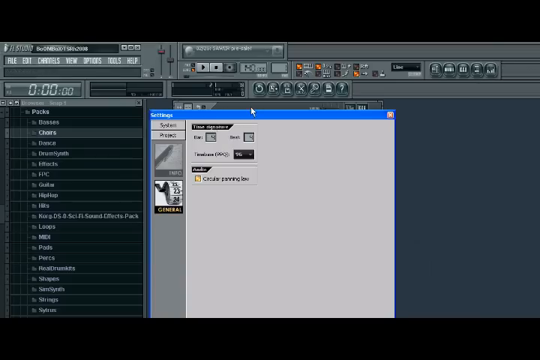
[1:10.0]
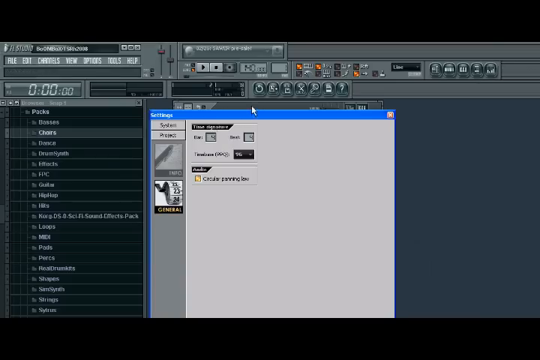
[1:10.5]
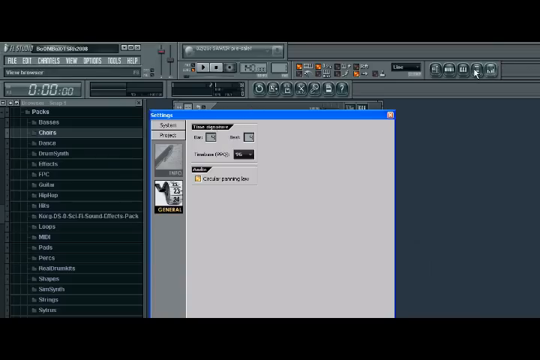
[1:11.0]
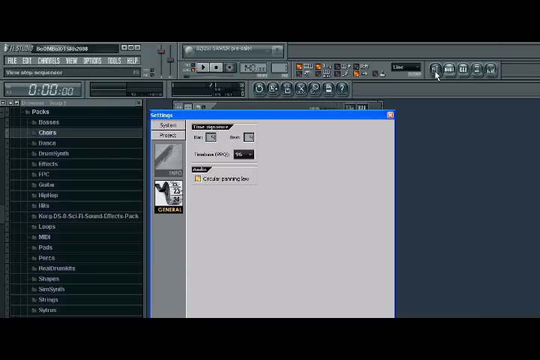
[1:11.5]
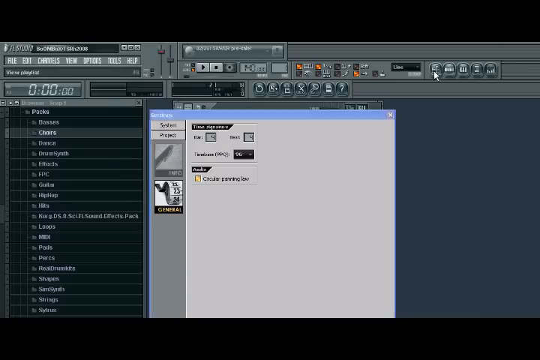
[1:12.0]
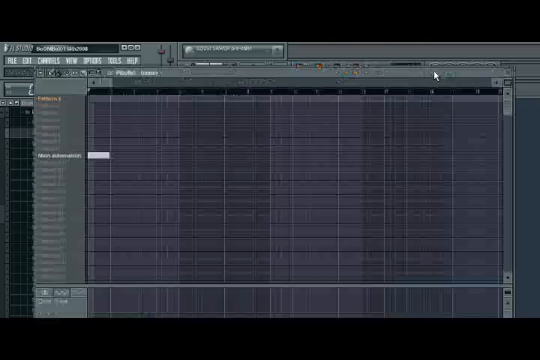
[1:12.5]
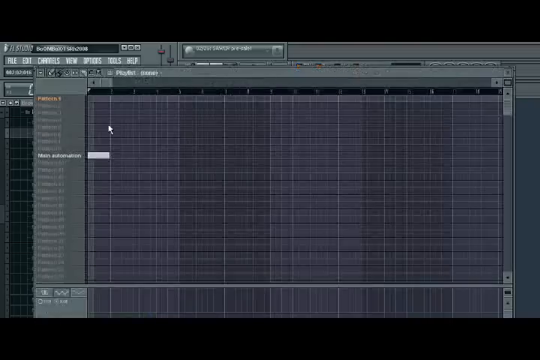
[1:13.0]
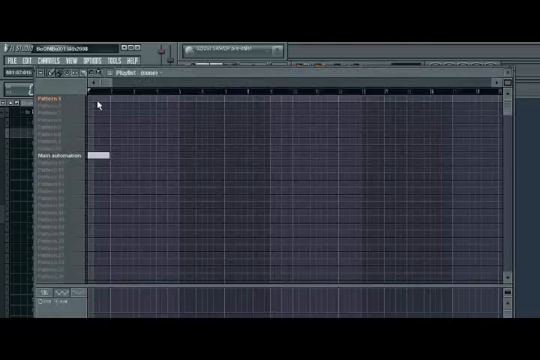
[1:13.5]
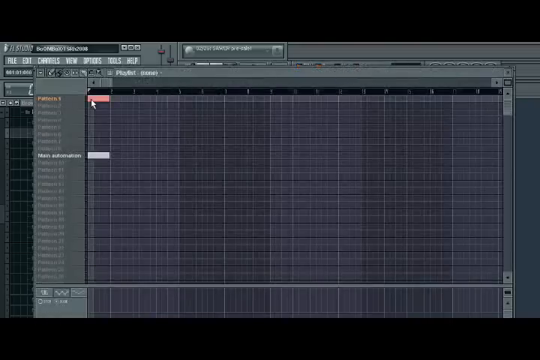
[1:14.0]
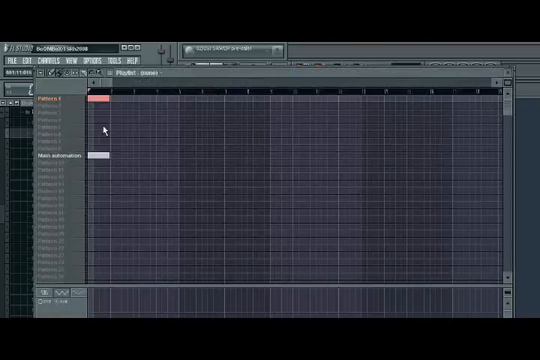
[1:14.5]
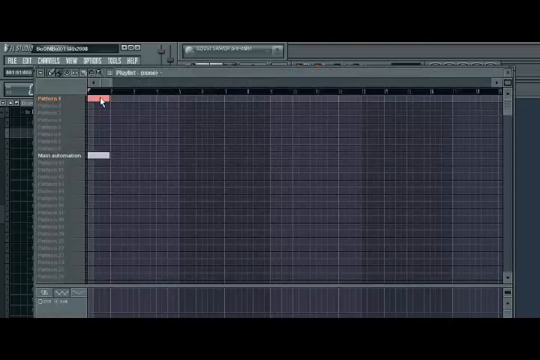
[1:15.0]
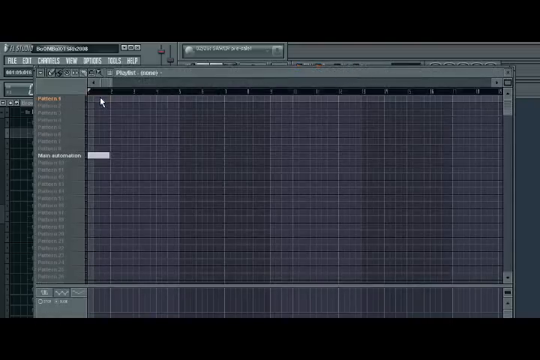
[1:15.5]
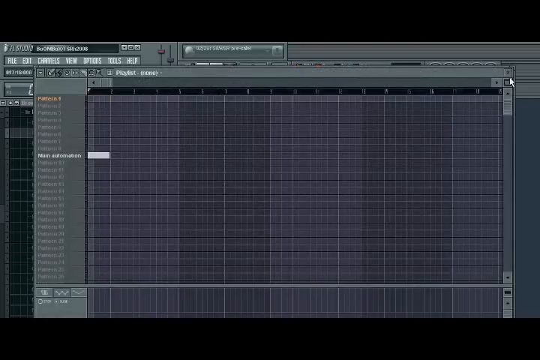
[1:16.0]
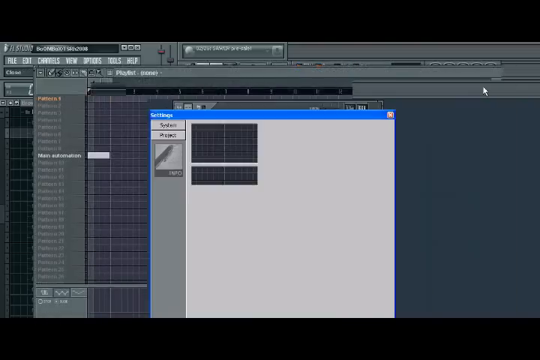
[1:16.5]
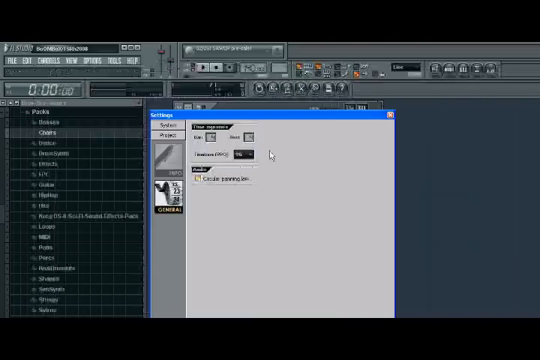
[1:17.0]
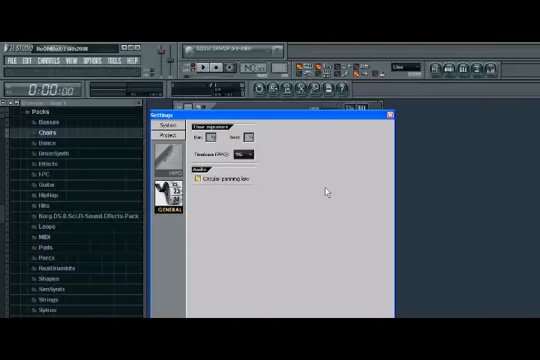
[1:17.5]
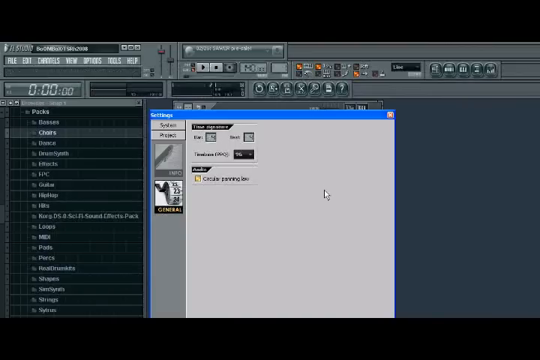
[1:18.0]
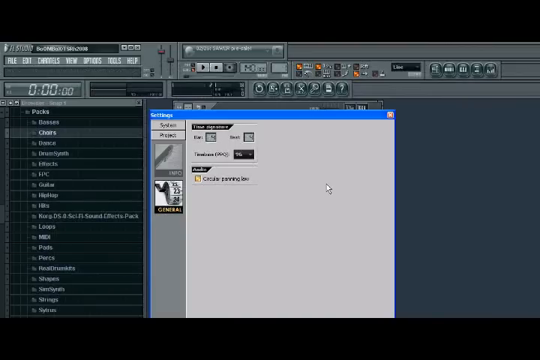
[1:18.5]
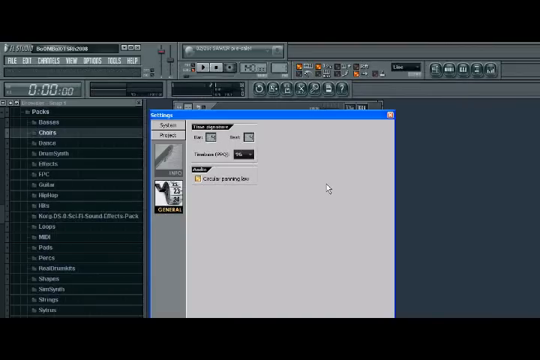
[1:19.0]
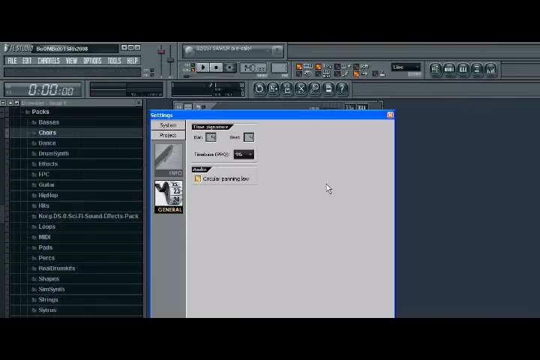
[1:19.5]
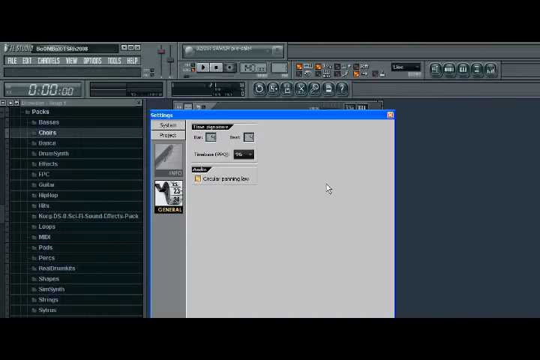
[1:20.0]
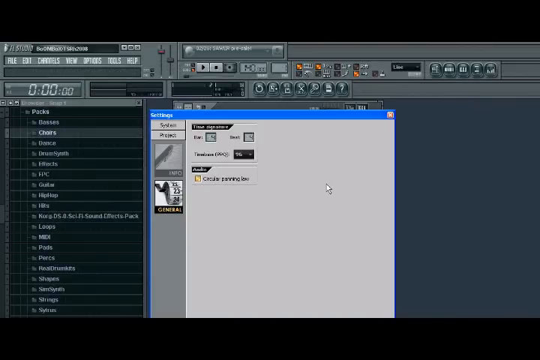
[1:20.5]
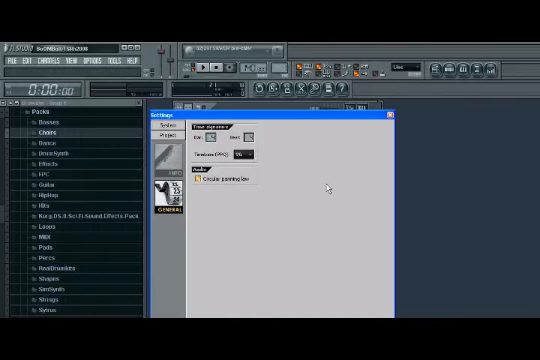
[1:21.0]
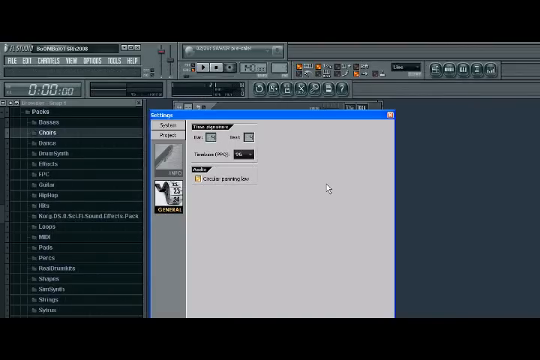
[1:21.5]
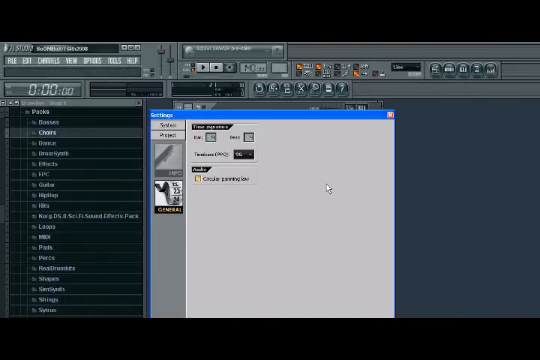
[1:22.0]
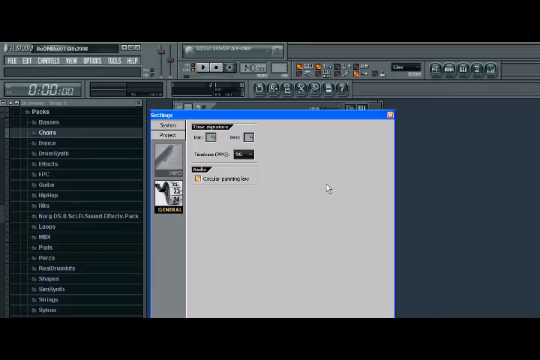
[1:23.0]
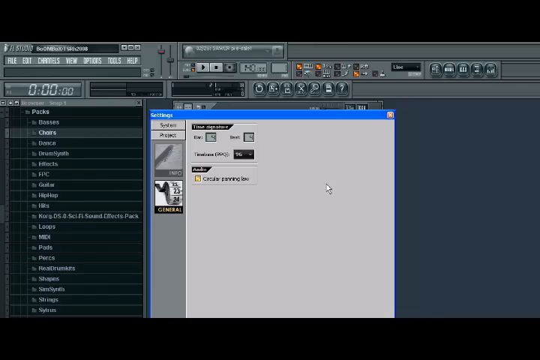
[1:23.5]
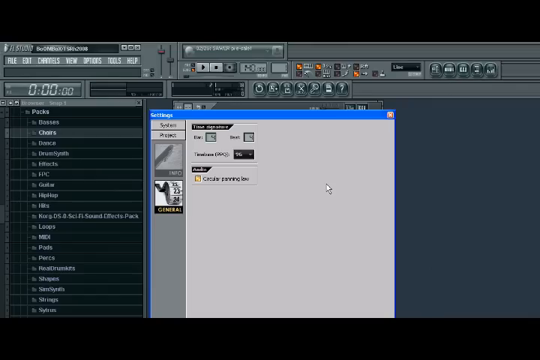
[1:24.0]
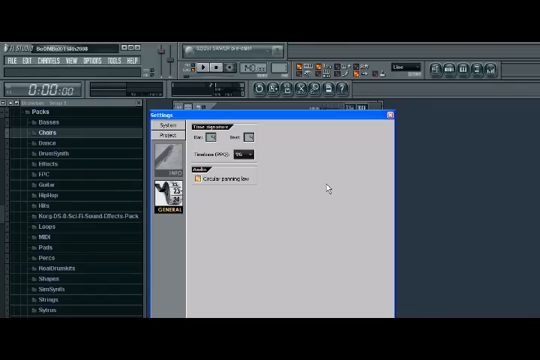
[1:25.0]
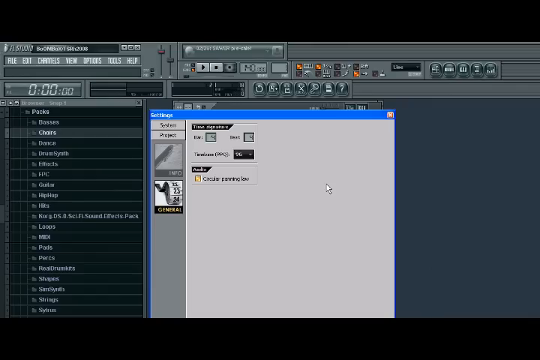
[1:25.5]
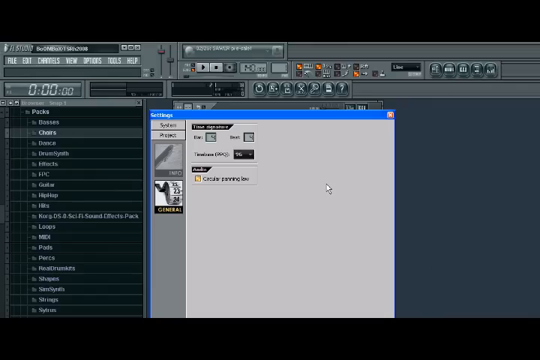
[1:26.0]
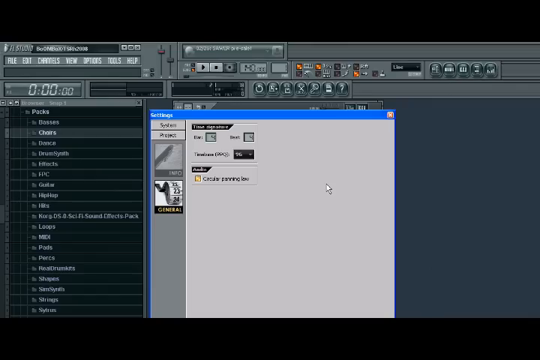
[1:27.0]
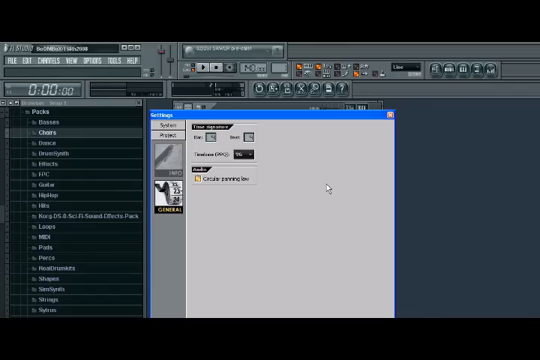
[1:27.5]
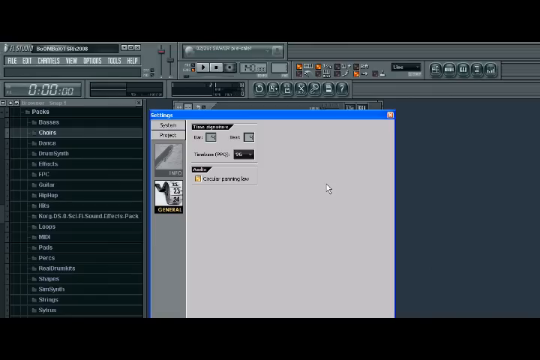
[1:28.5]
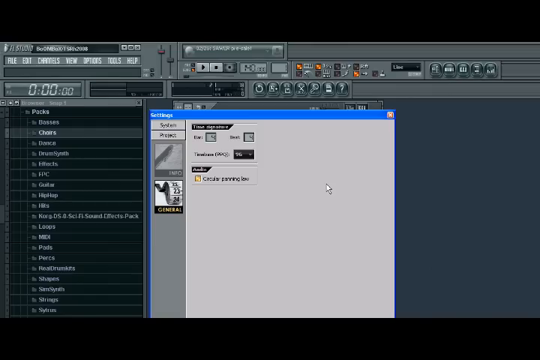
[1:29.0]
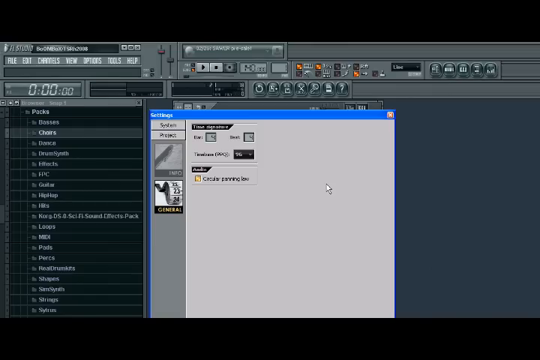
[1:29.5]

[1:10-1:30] The settings page in FL Studio with a light gray background is shown. The user clicks into another part of the page, shows some options in one of the hexagonal grids, then clicks back into the light gray settings page. The cursor hovers over an empty part of the light gray background area that is not part of the settings themselves. No people or animals appear; the changes are just a few different screens within the FL Studio application.